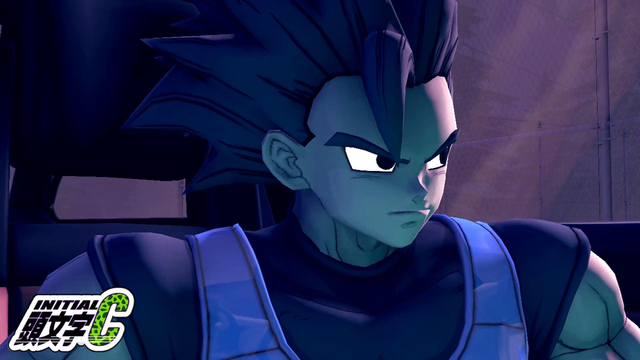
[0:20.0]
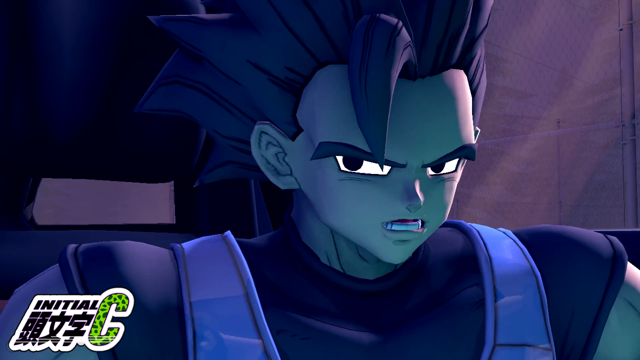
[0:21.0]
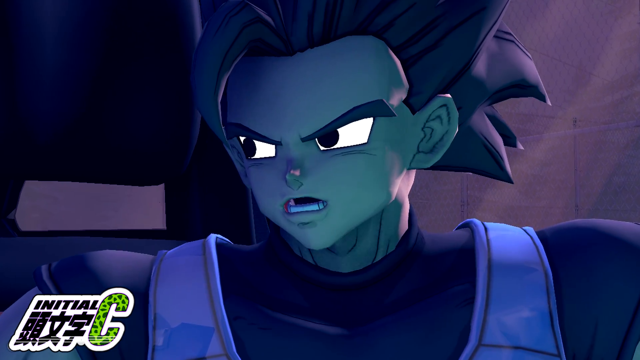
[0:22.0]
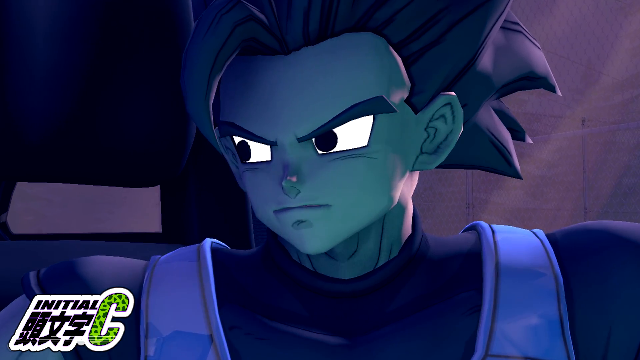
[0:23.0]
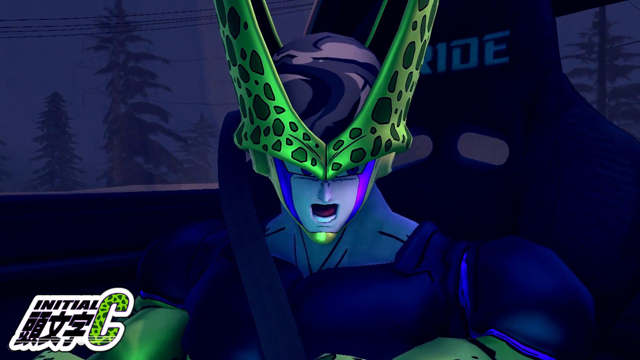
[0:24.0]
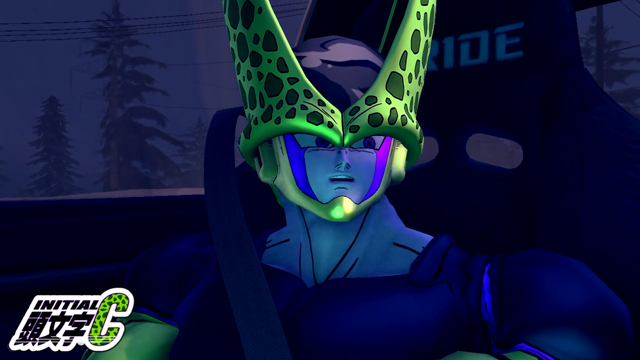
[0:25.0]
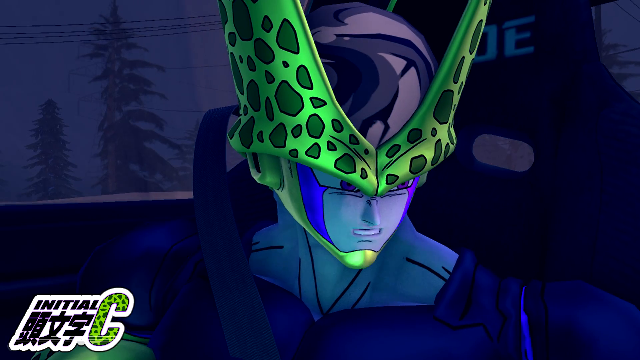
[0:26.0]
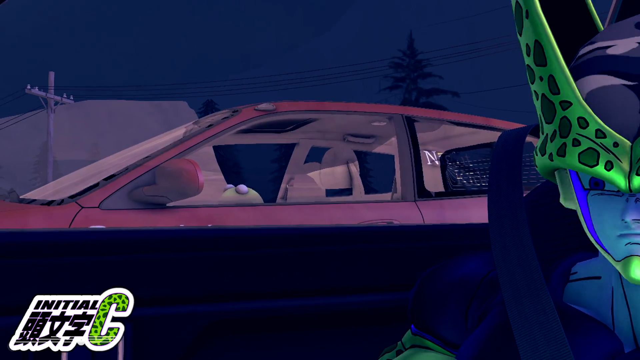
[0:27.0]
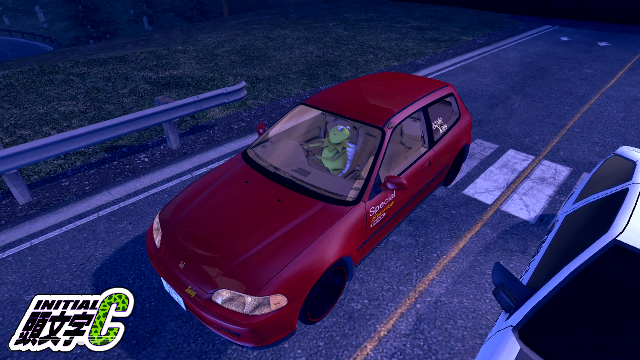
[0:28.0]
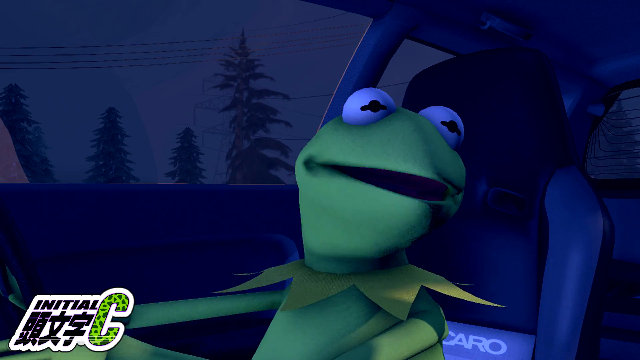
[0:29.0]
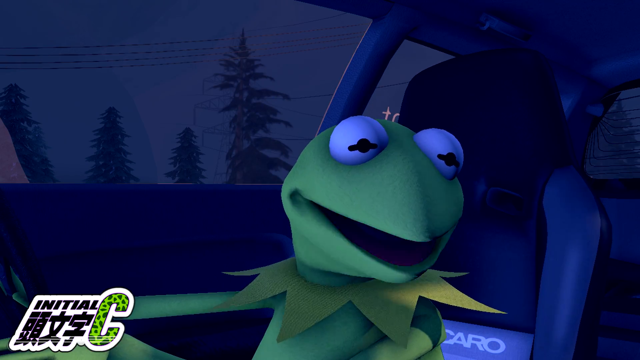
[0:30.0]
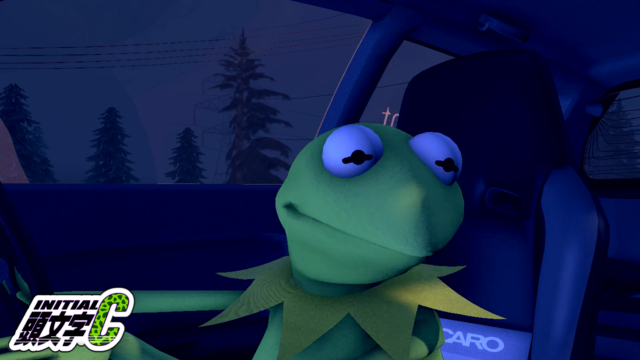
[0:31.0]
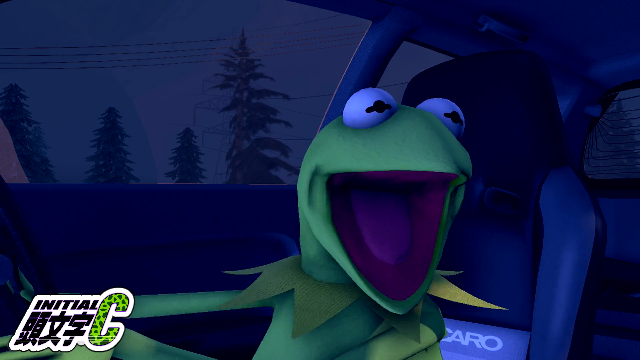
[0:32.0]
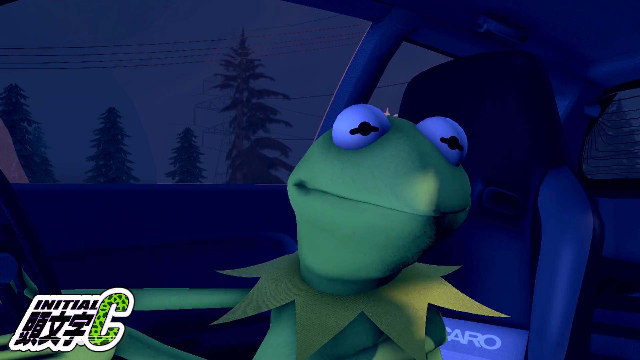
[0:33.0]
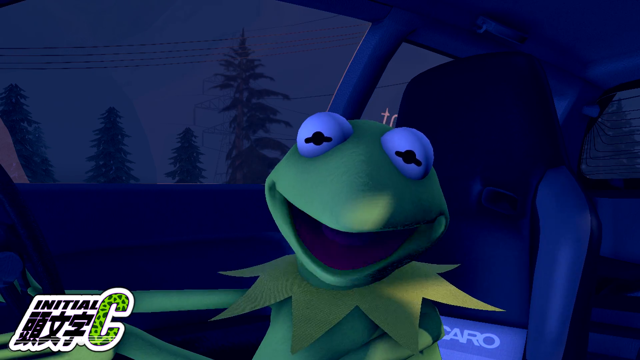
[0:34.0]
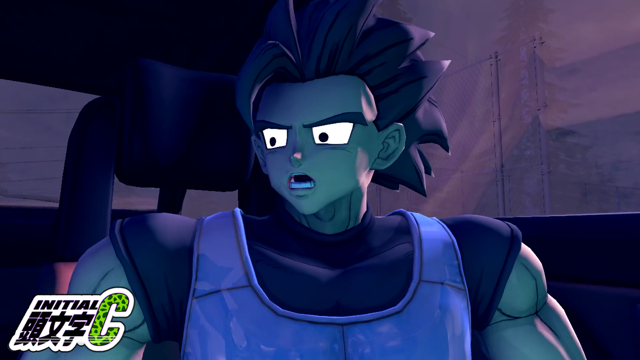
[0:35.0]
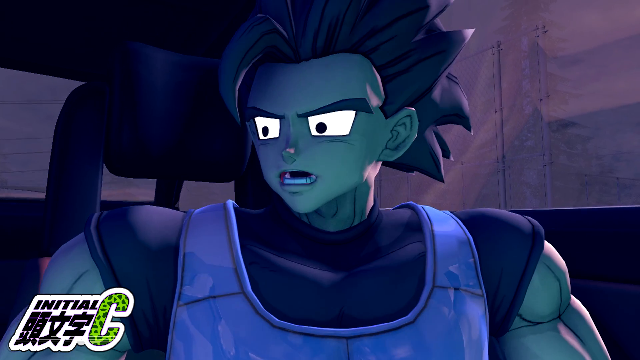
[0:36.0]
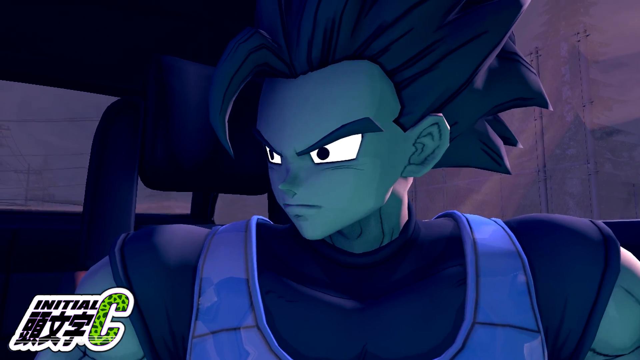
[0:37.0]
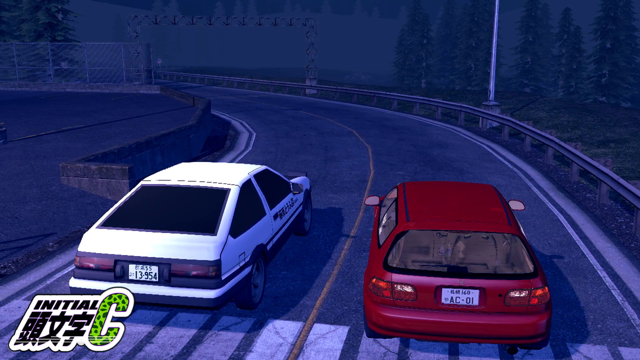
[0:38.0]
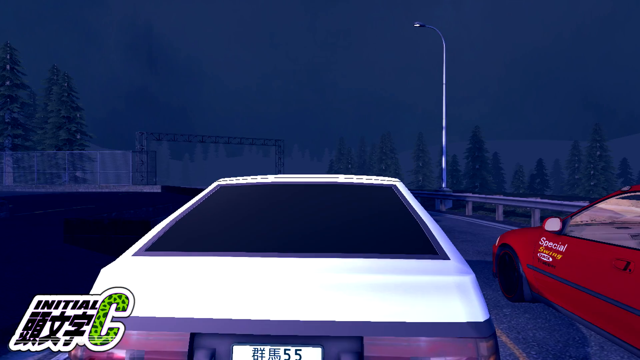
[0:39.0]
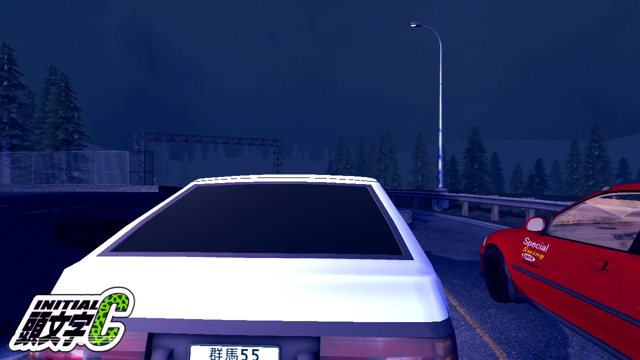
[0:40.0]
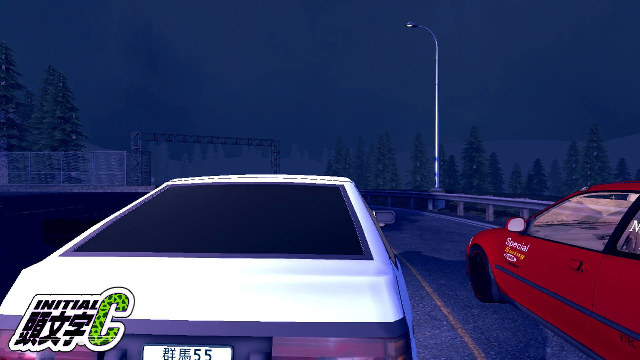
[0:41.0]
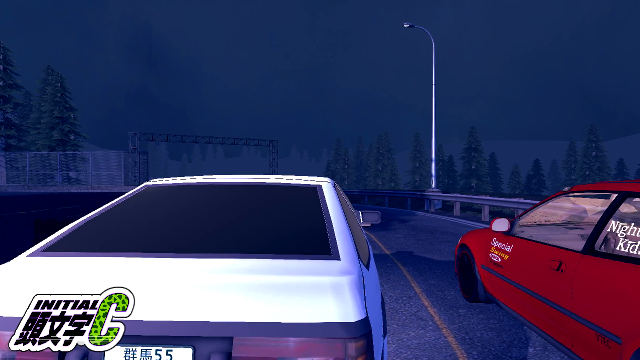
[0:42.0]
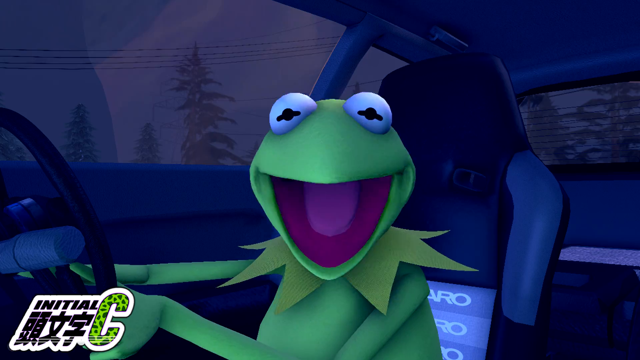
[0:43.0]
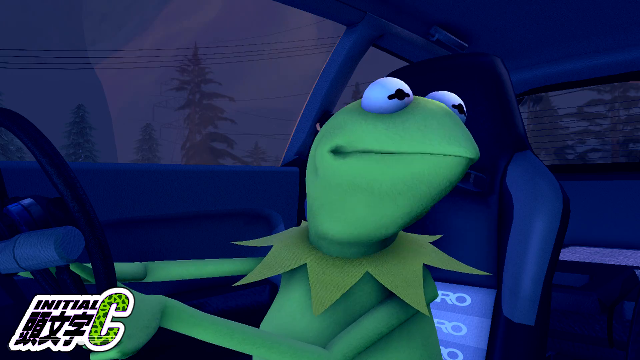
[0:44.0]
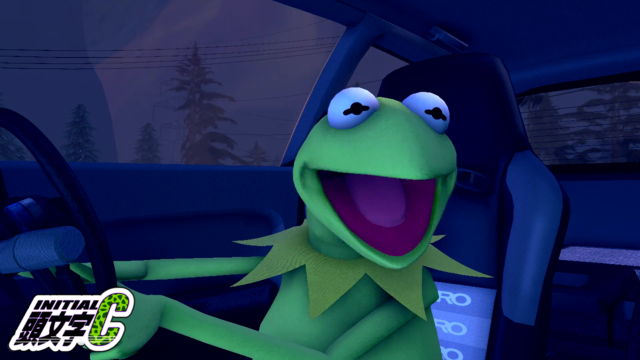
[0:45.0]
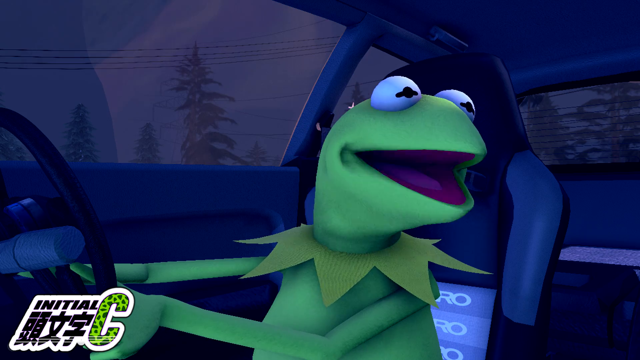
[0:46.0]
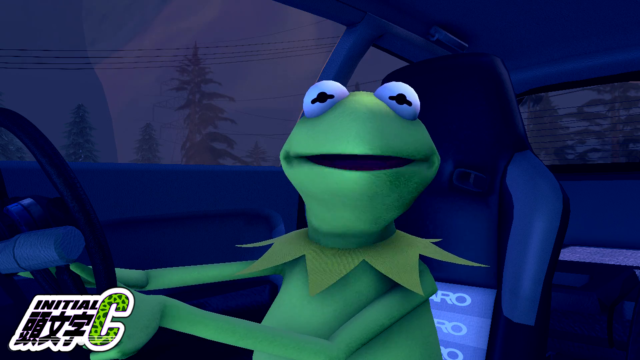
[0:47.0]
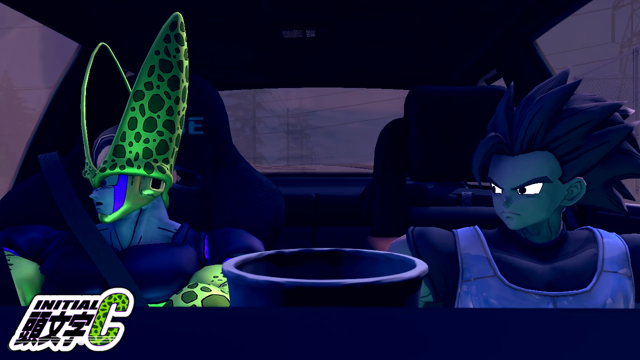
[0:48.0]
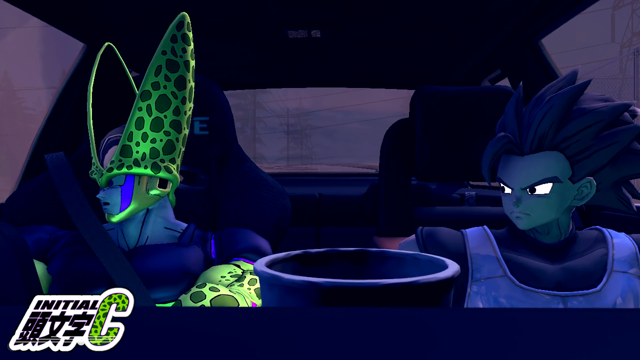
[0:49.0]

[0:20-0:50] The character who looks like Vegeta is talking to a green character, apparently named Cell. Another car pulls up beside them, and Kermit the Frog talks to them, seemingly wanting to race down the highway. He is aggressive about wanting a race between himself and the Dragon Ball characters. It looks like evening, almost dark, and they are in a heavily wooded area of evergreen and pine trees. The video looks fan-made. The Dragon Ball characters look extremely agitated, as if ready for a race, and both cars apparently rev their engines side by side.